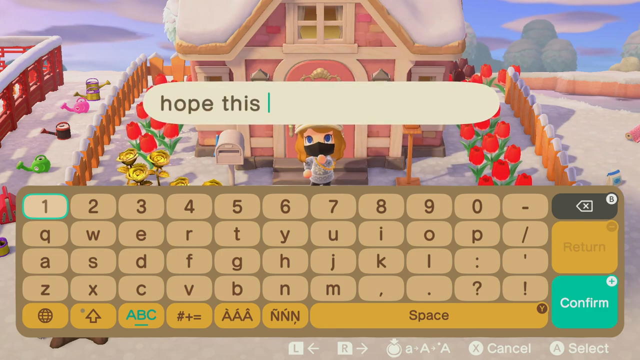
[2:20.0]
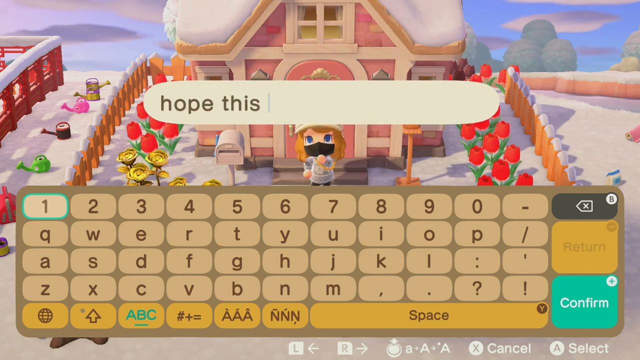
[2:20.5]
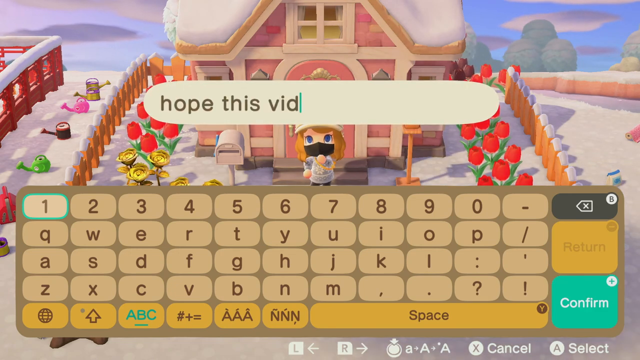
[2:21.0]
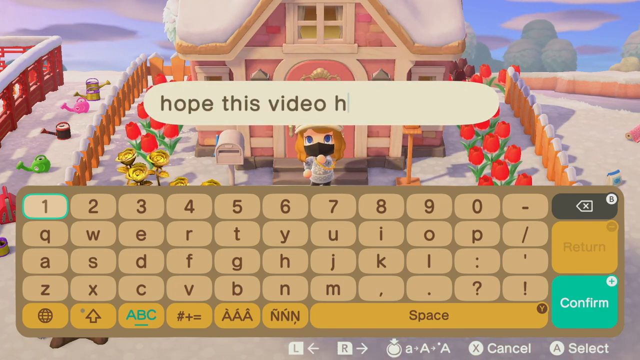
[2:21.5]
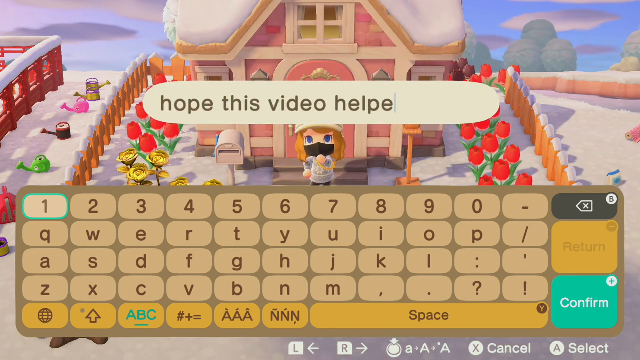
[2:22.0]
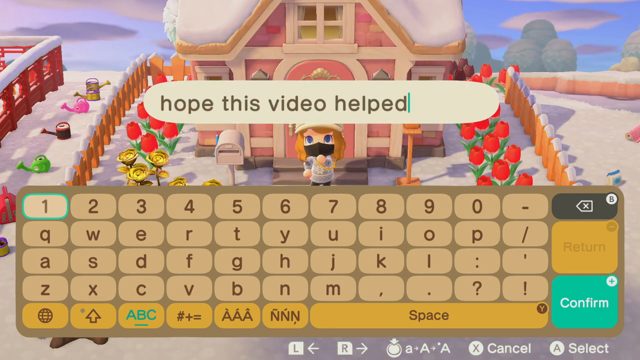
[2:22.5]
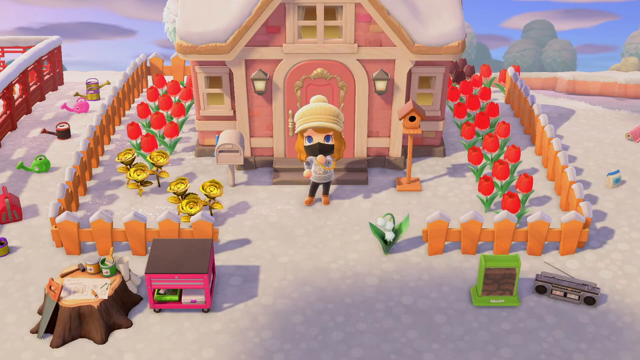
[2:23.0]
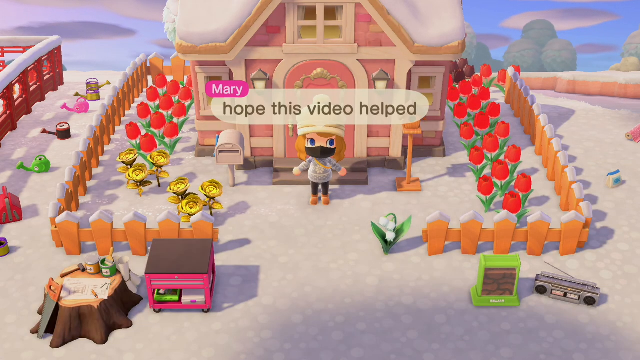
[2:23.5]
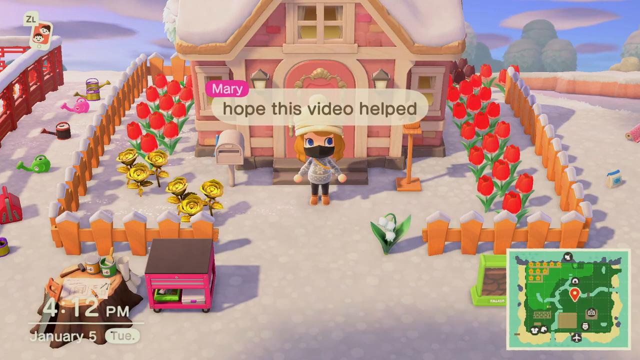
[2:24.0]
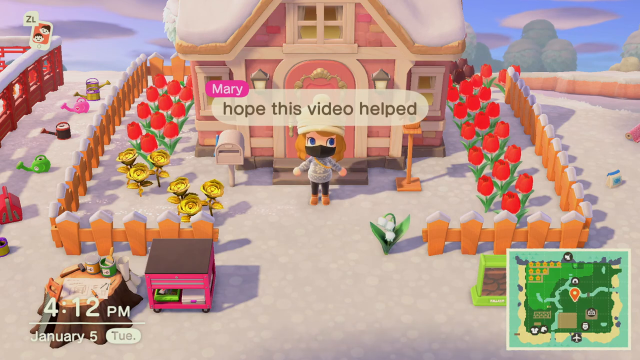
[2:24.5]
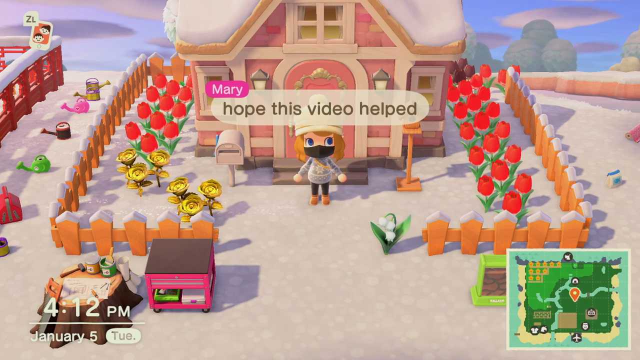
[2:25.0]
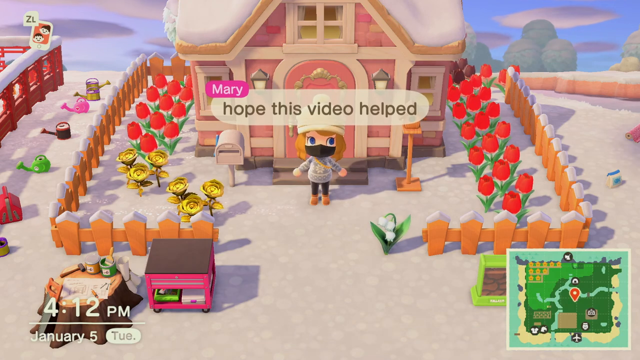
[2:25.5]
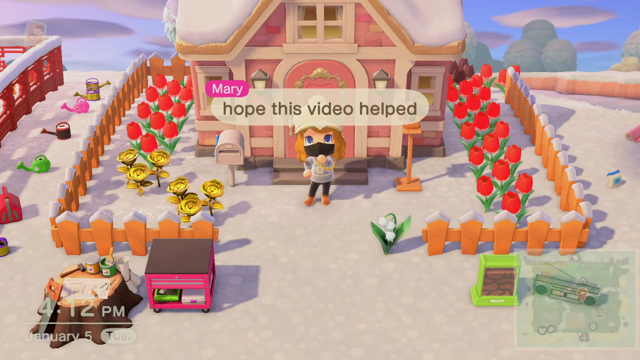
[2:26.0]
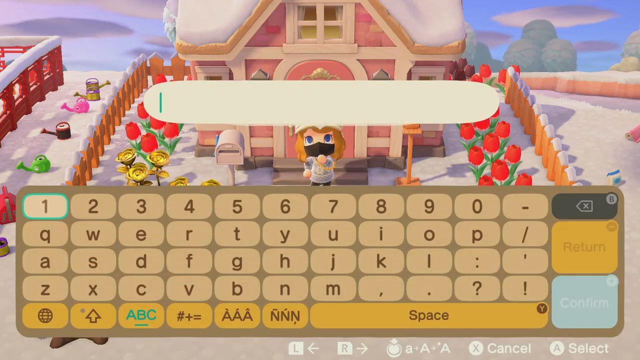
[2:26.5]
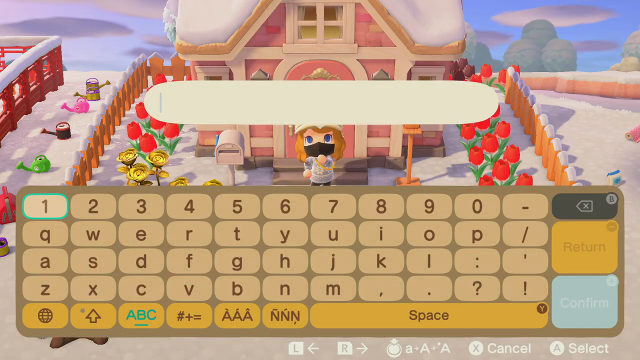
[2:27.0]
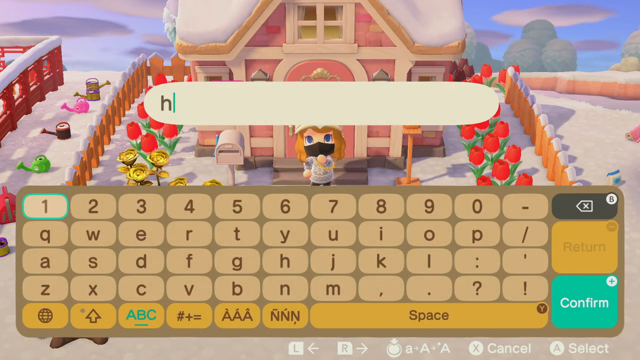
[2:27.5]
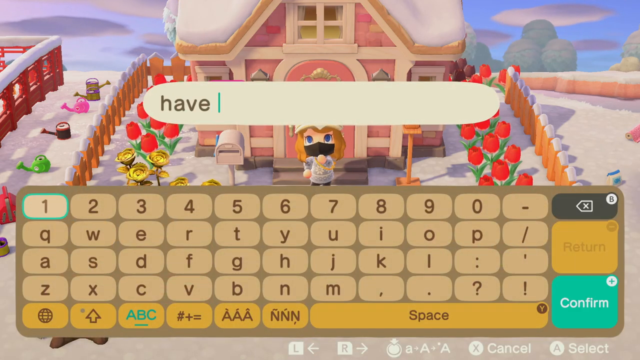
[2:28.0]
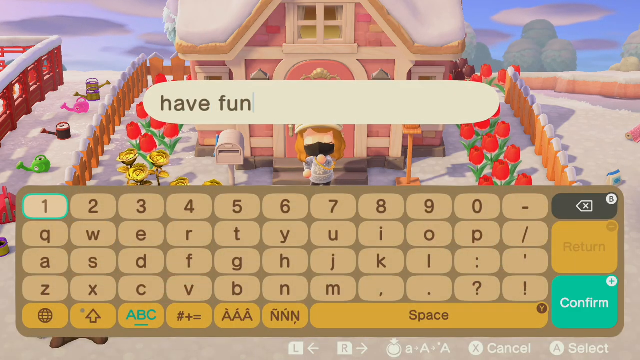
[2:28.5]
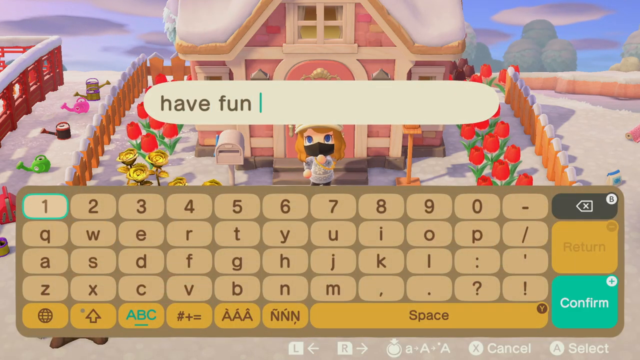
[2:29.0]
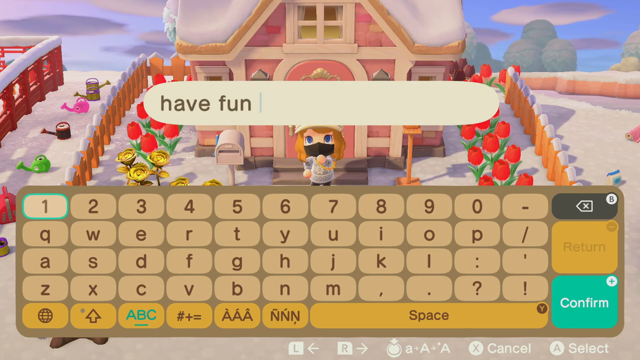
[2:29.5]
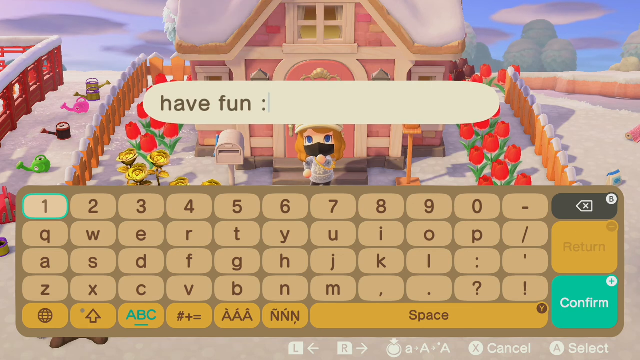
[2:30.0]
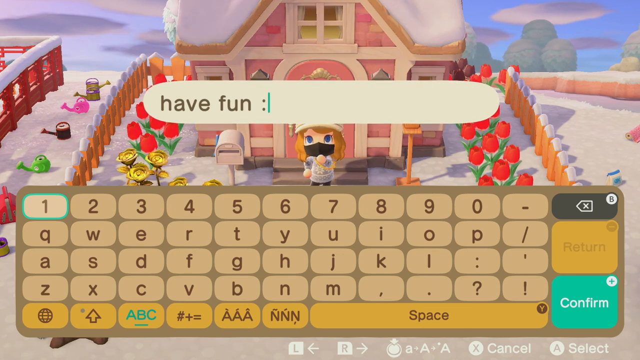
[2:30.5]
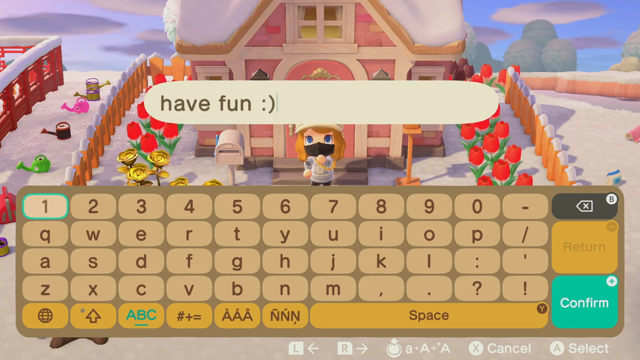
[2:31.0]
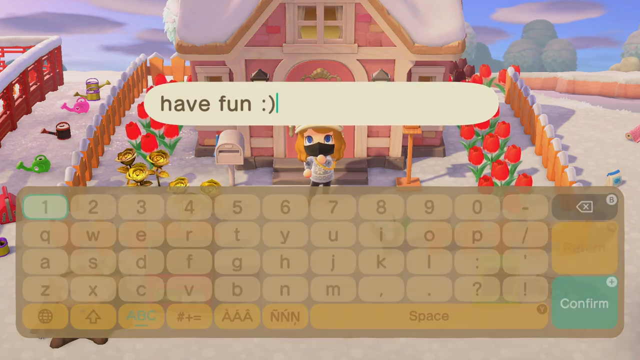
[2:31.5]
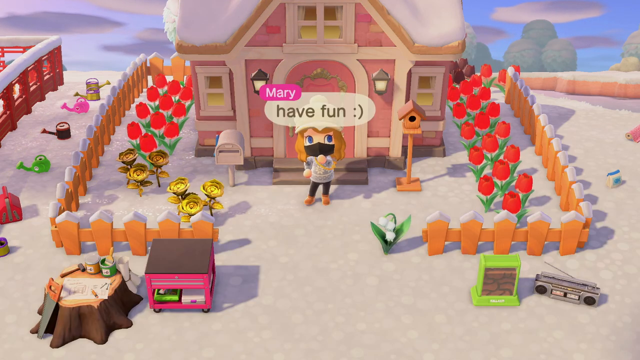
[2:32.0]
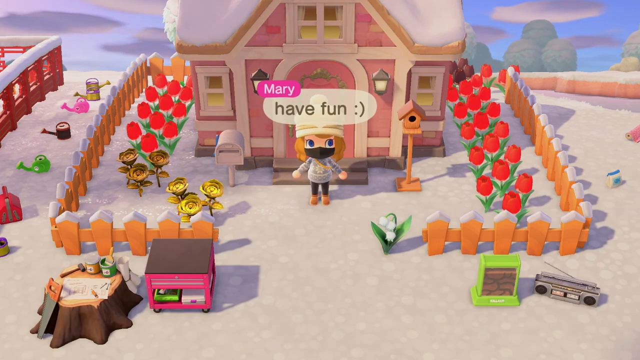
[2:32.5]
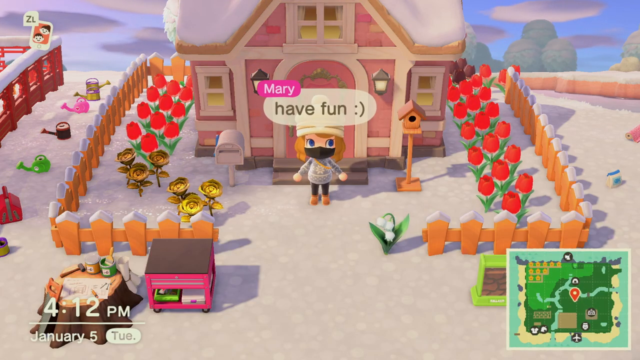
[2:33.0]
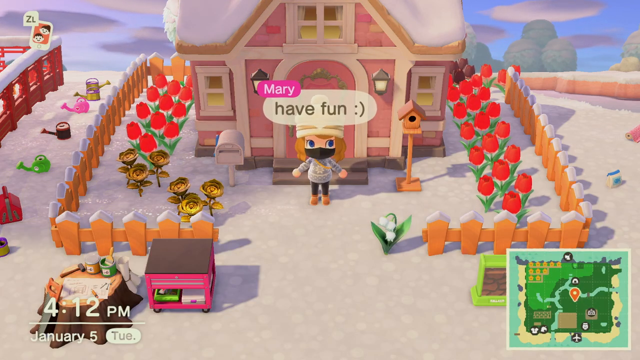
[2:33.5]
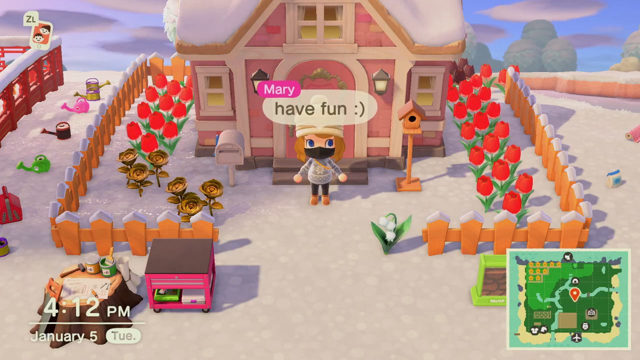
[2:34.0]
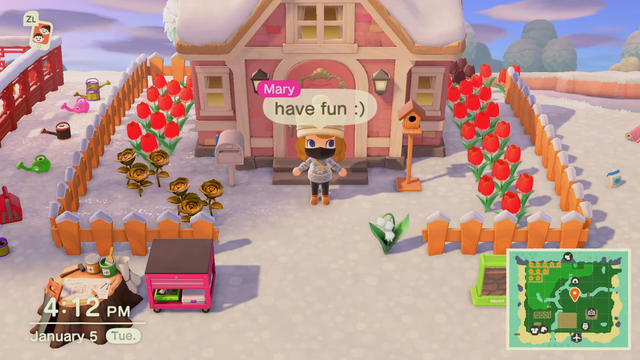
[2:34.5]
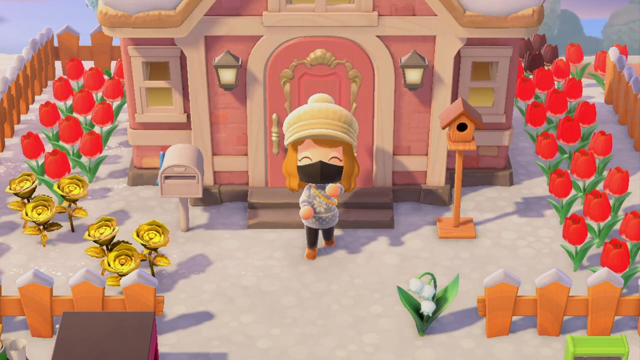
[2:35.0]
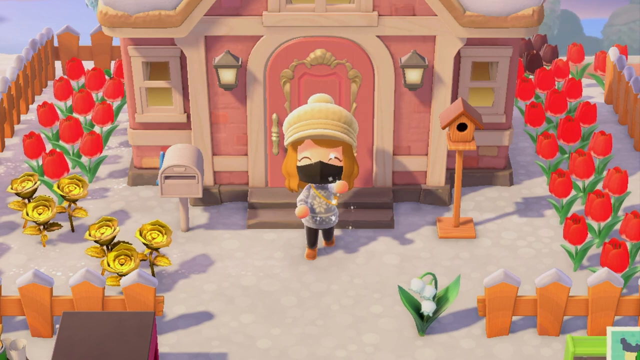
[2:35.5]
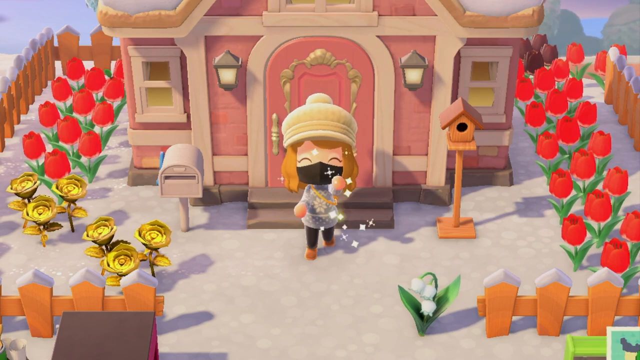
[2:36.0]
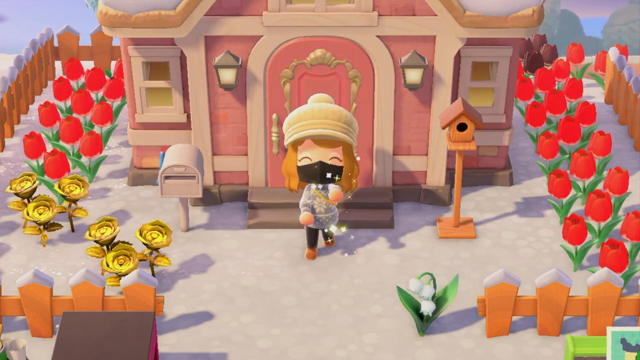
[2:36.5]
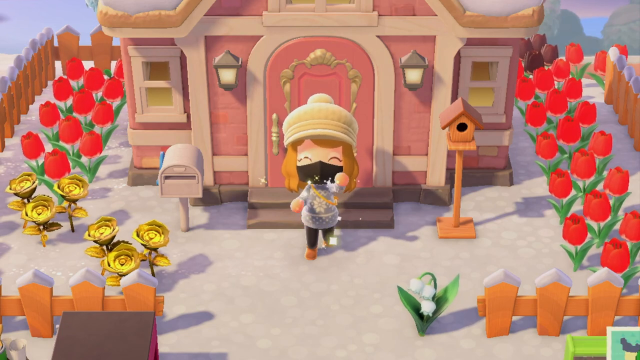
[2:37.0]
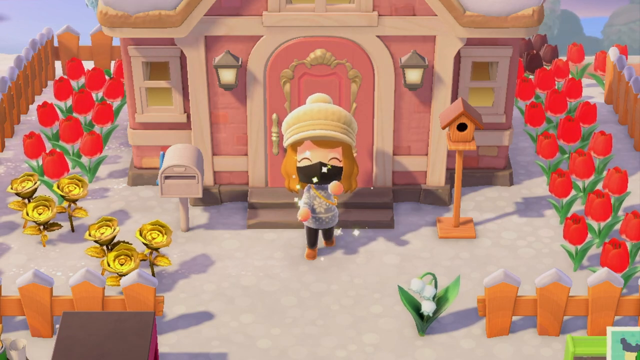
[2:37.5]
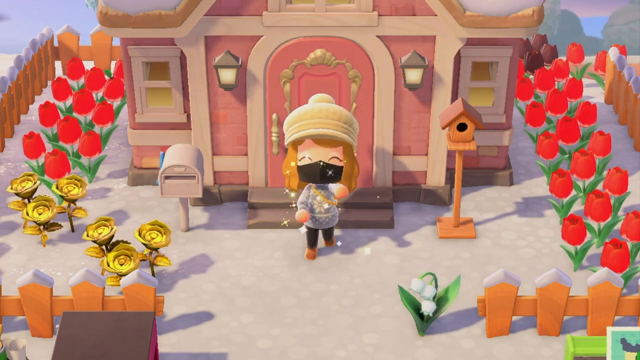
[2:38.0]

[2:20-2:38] A character named Mary says "I hope this video helped," which someone types out on a keyboard that appears at the bottom of the screen. They then type "have fun" with a smiley face, and her name Mary appears in a pink bubble as she says it. She comes out and moves her hands very quickly, as if to celebrate, squeezing her eyes shut and being very animated. Her house looks like a gingerbread house, with snow on the roof, and is surrounded by a wooden picket fence with snow on top of each section. Red tulips and yellow roses are around her house, and watering cans are along the left side of the fence. Various items are in front of the picket fence, including boxes, one green and one pink. At the end she appears to be shaking snow, as little white dots come out when she moves her arms, while she shakes her hands and squeezes her eyes shut.